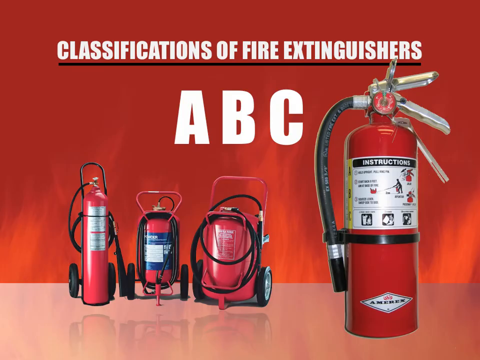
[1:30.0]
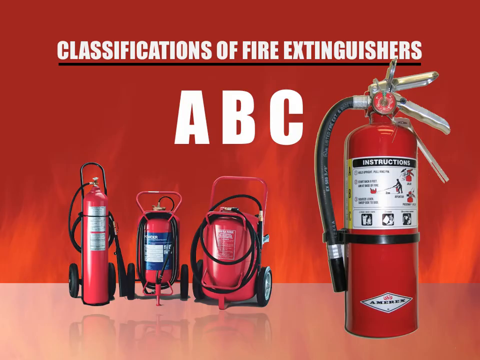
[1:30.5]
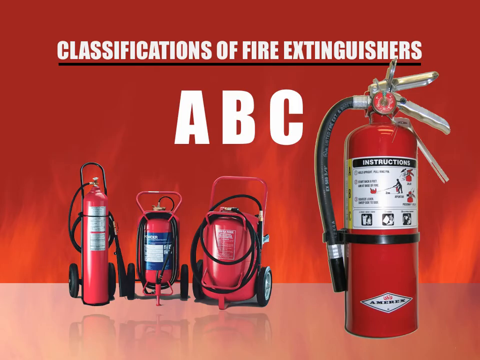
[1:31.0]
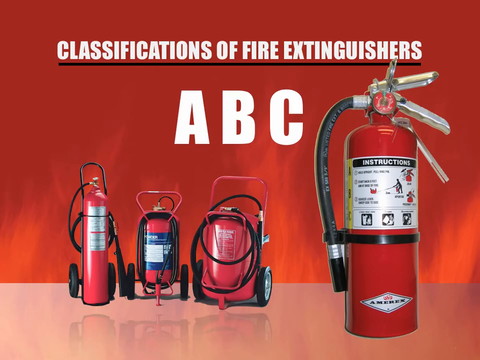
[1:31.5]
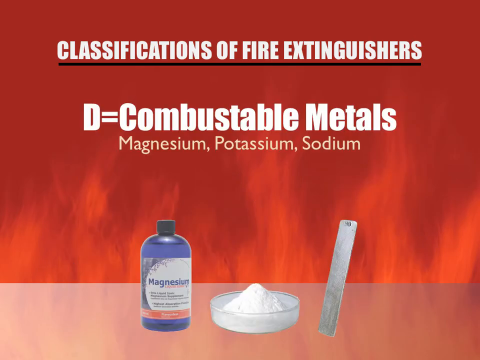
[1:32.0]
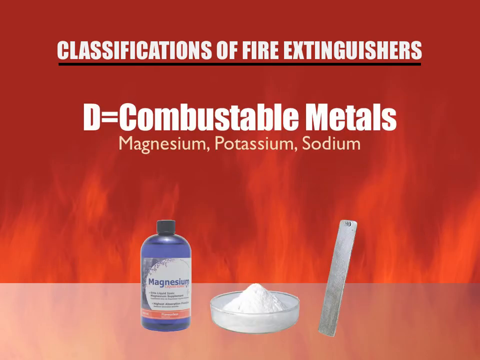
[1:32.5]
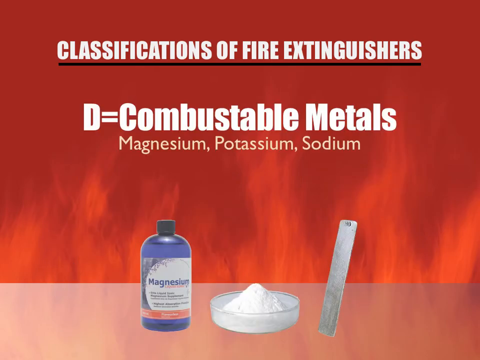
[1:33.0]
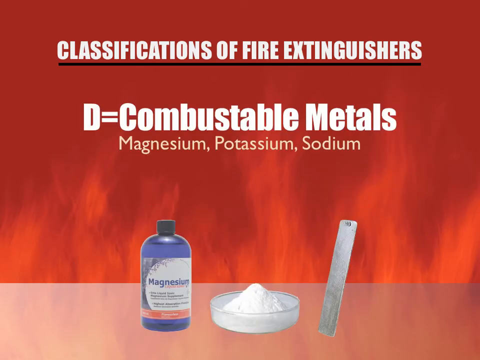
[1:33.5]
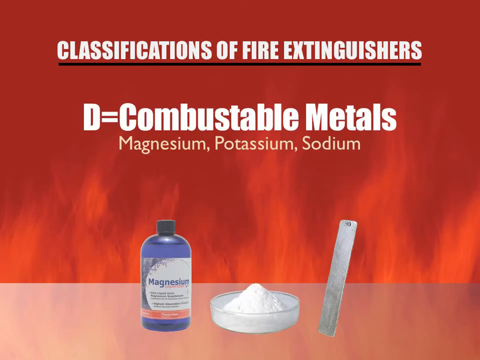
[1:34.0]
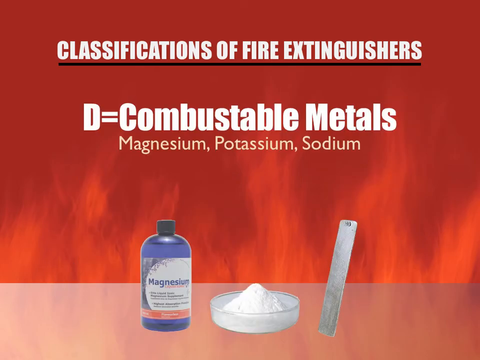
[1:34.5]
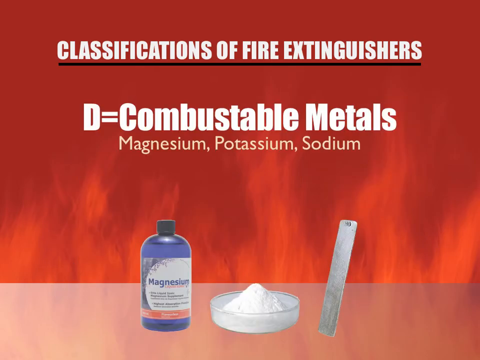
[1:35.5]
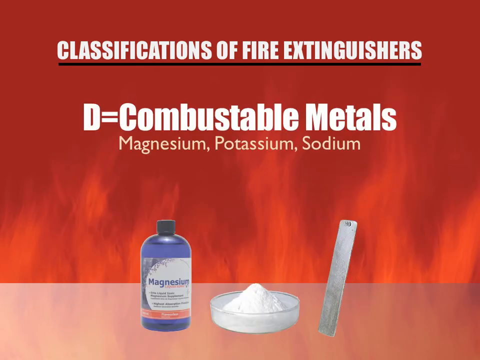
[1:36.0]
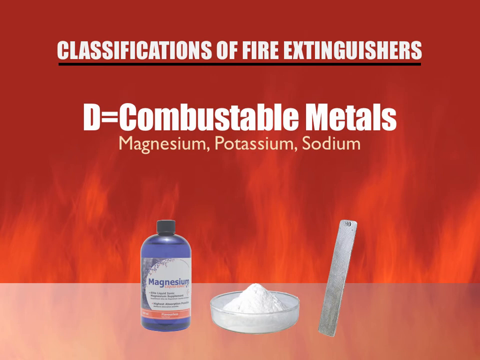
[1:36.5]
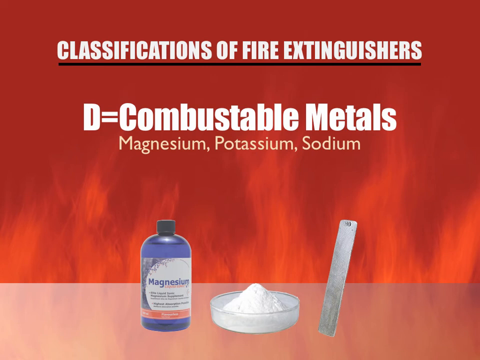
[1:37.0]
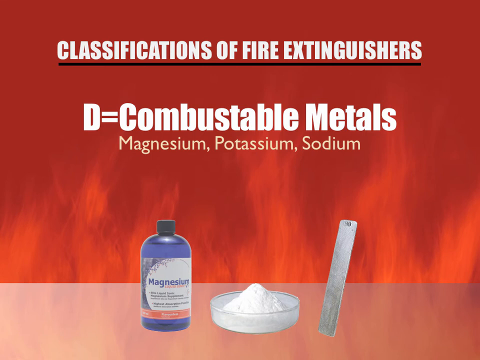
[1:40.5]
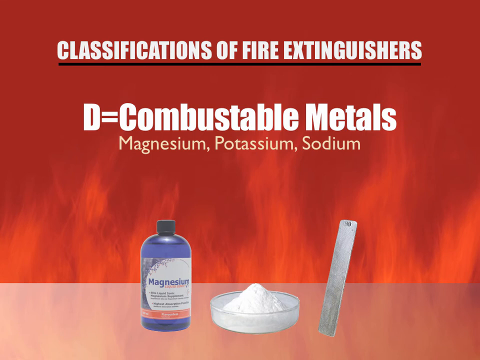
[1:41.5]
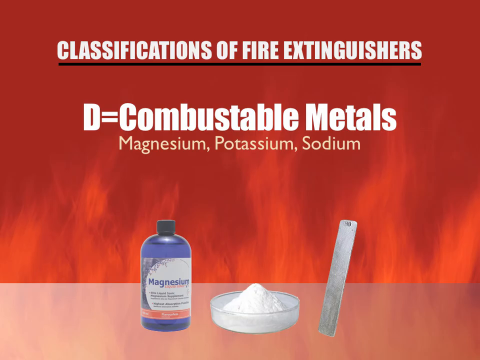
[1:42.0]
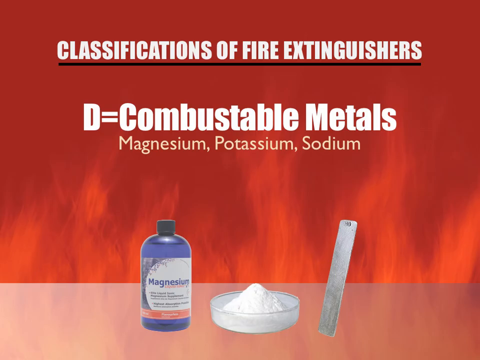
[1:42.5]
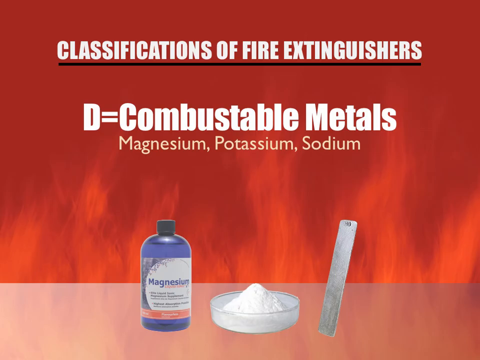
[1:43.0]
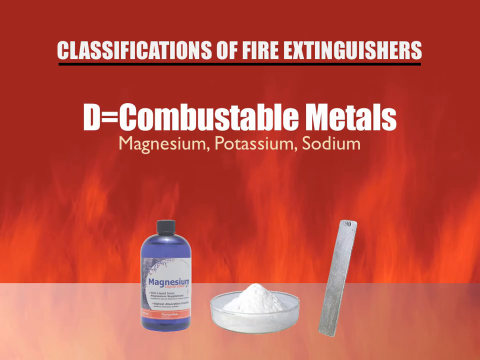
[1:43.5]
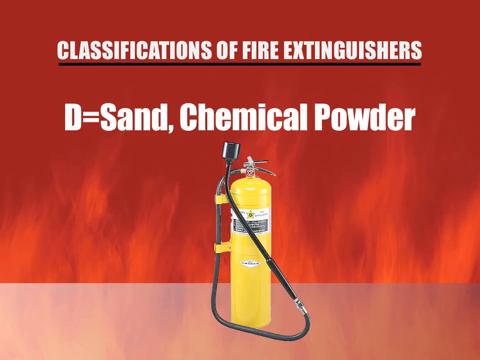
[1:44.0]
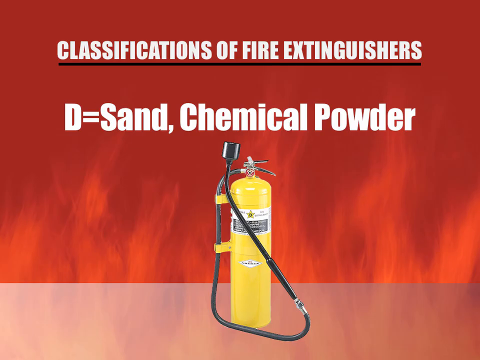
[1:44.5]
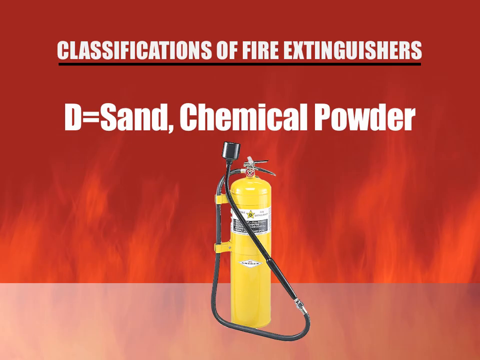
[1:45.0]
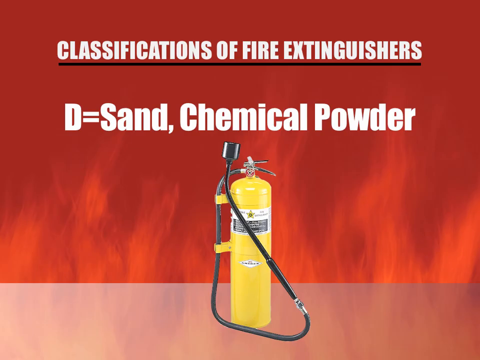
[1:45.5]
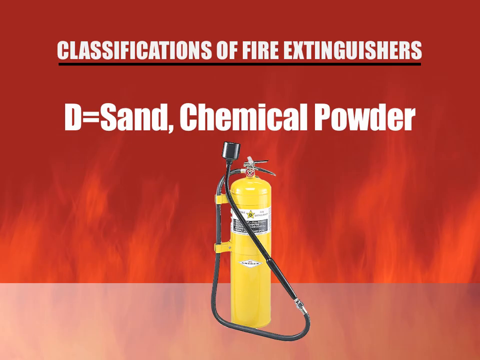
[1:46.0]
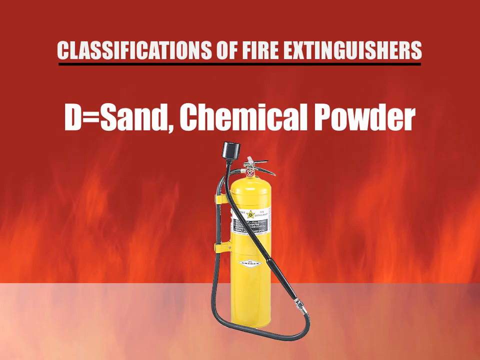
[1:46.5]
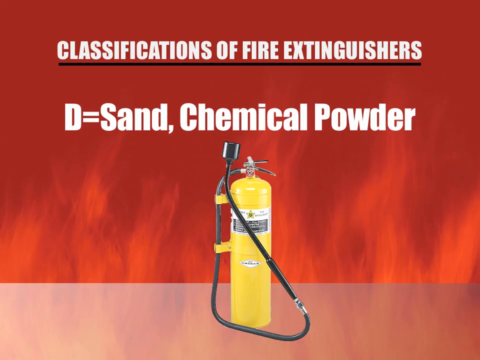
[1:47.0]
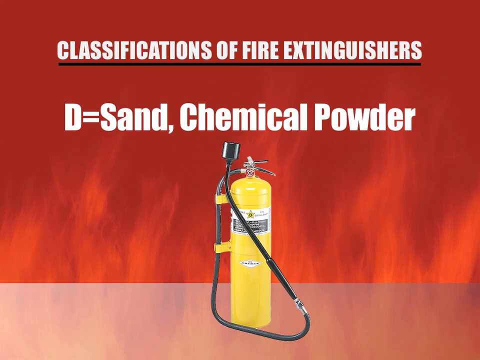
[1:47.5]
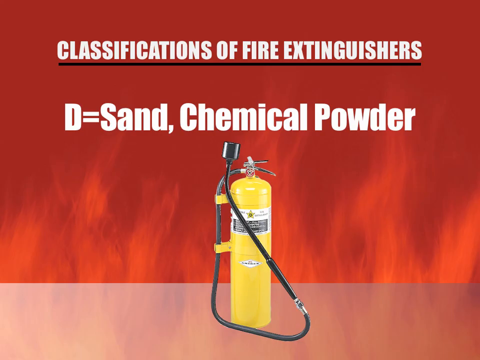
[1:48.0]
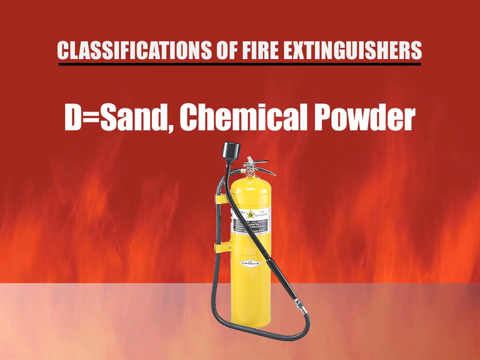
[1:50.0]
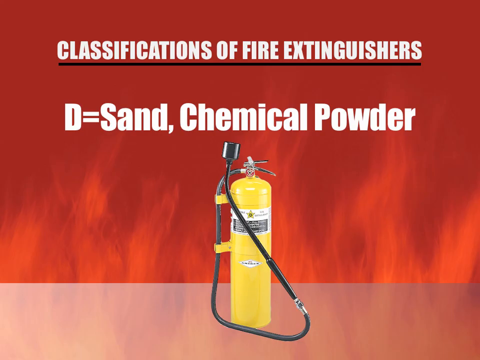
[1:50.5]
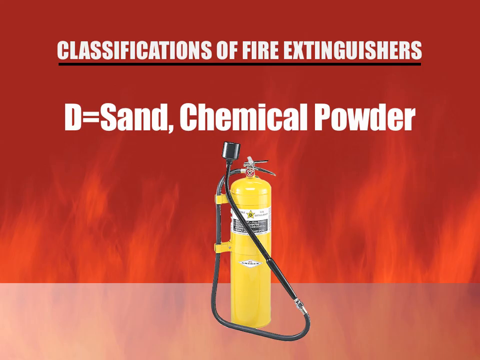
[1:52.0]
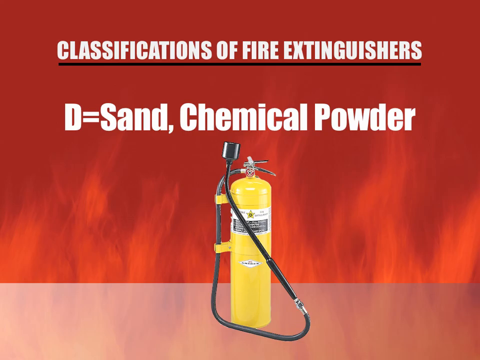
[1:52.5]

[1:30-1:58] "Classification of fire extinguisher" appears. Ordinary combustibles are listed as paper, wood, cardboard and plastic, and flammable liquids as gasoline, kerosene, grease and oil. A man wears a protective fire suit with a hat and a big jacket; the people shown wear big jackets and hats for protection from fire. They operate with dry chemicals, demonstrating how it works.